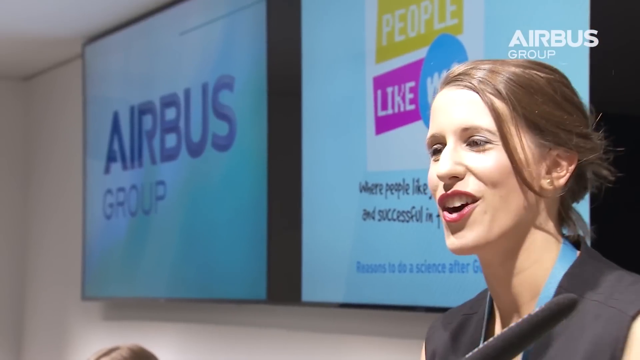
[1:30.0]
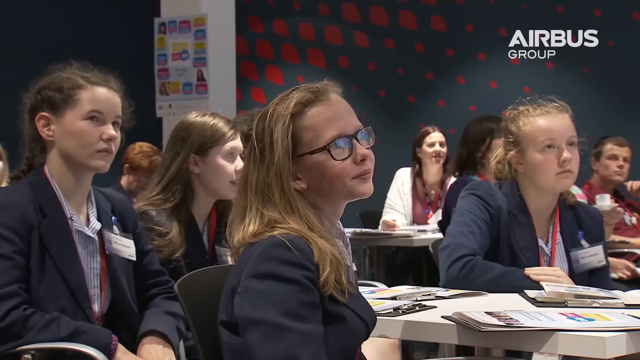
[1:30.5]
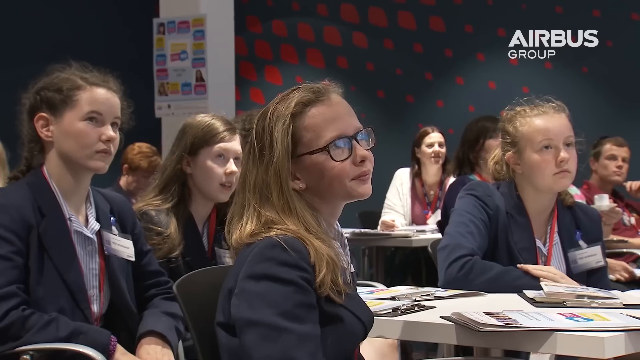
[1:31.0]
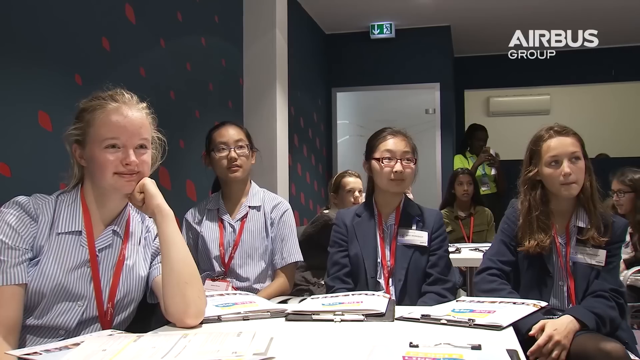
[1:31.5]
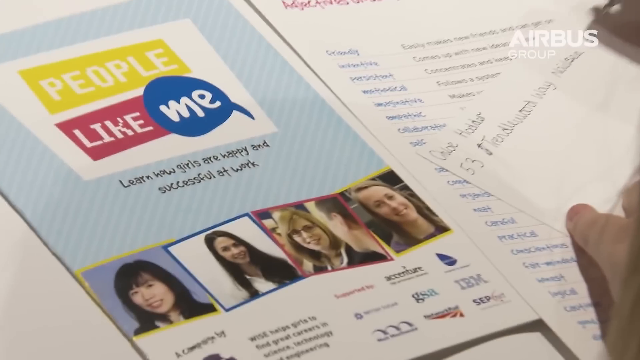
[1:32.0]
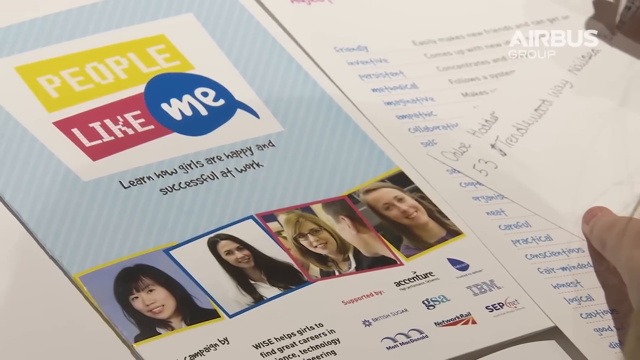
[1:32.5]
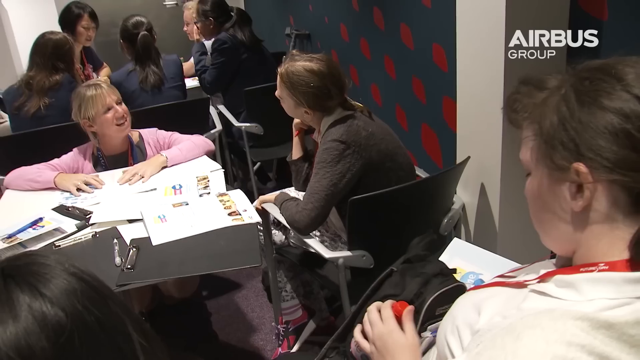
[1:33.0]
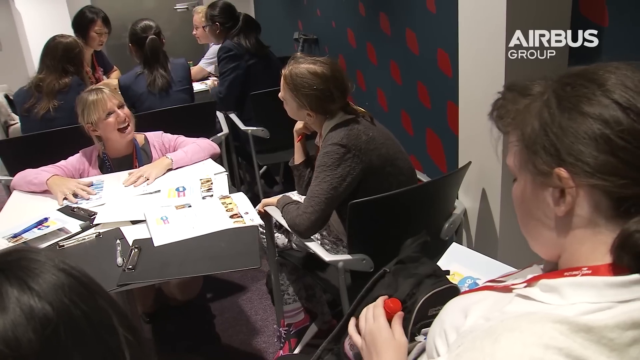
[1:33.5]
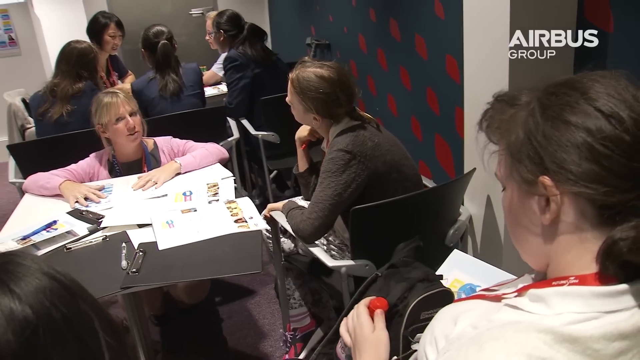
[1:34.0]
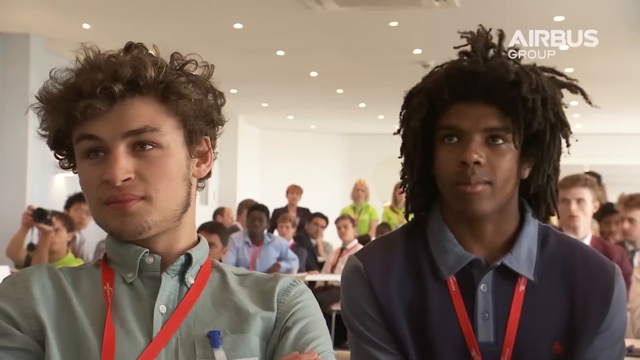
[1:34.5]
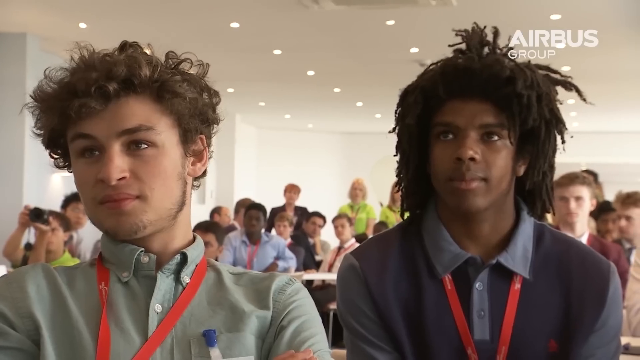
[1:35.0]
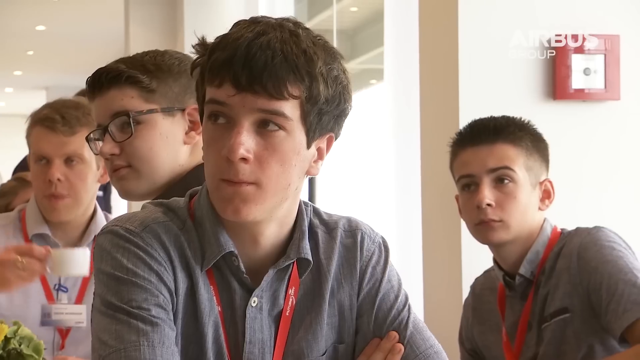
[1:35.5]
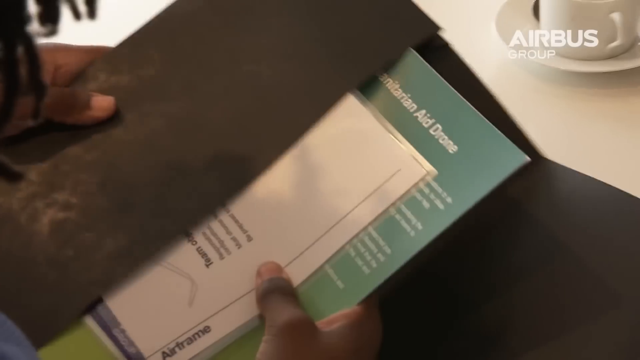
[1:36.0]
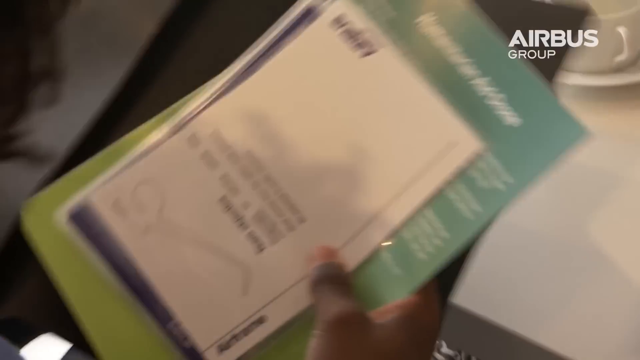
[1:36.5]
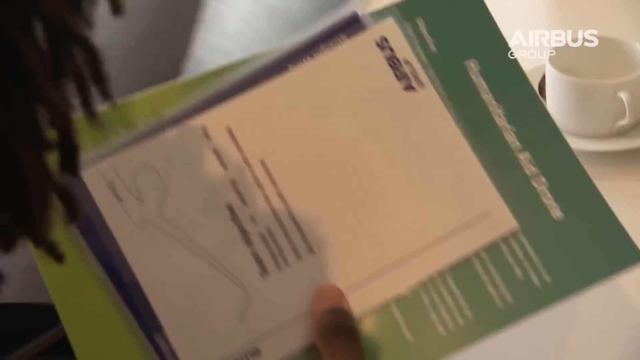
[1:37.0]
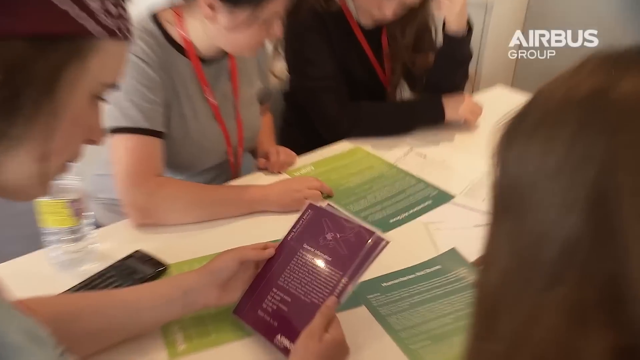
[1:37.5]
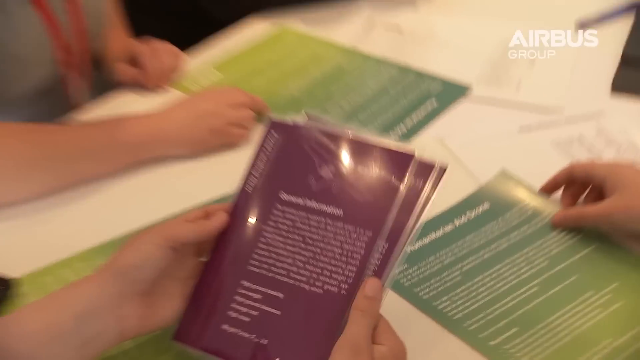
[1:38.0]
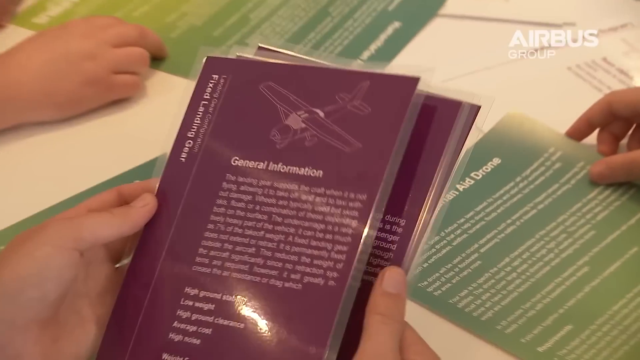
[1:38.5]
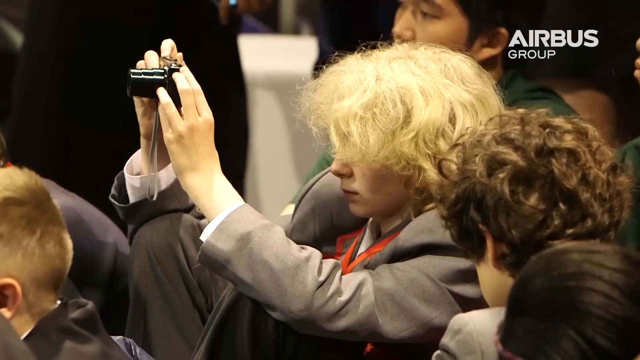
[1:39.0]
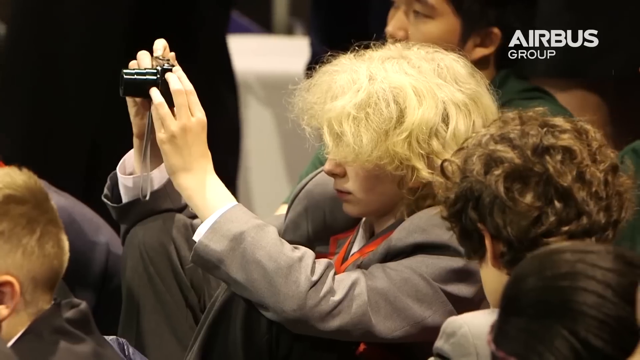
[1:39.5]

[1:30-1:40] A lady smiles and talks to a group of young students. Next, a group of young people appears in what looks like a classroom; a paper that says "People like me" is briefly shown on the left while someone writes a letter on a white piece of paper on the right side of the screen. The students talk animatedly, and a group of young boys listens. Students read paraphernalia and pamphlets, and the camera zooms in on one pamphlet that says "General Information". A blonde kid holds a camera and takes a picture, and then the video cuts back to a group of male students listening.